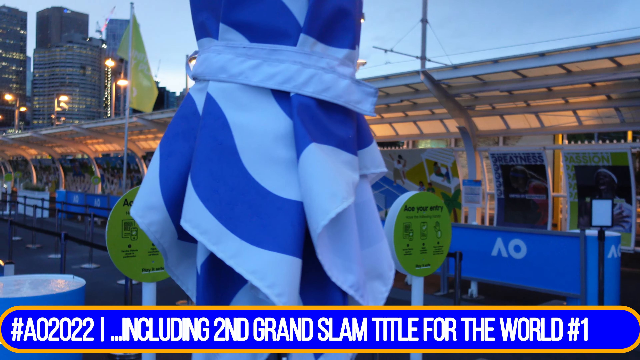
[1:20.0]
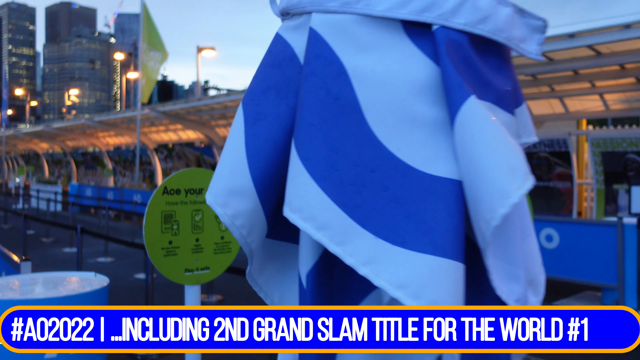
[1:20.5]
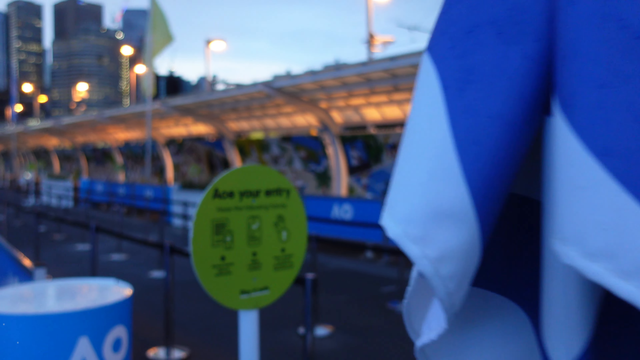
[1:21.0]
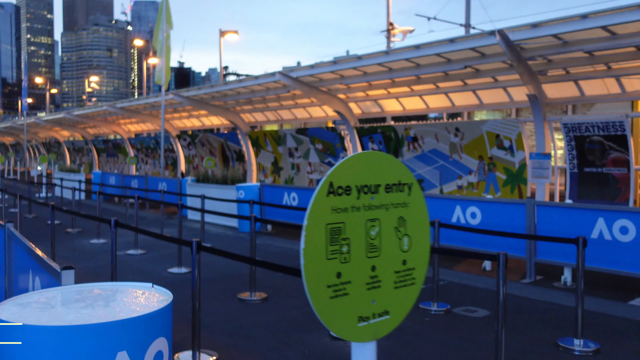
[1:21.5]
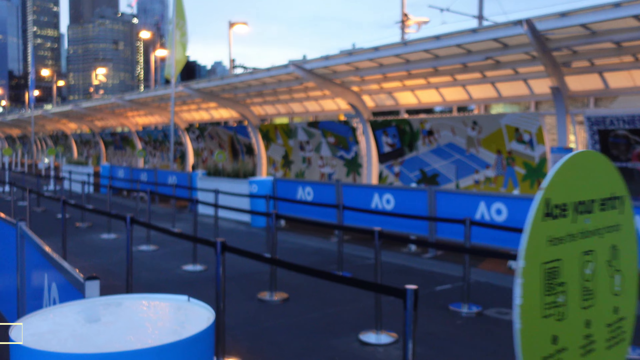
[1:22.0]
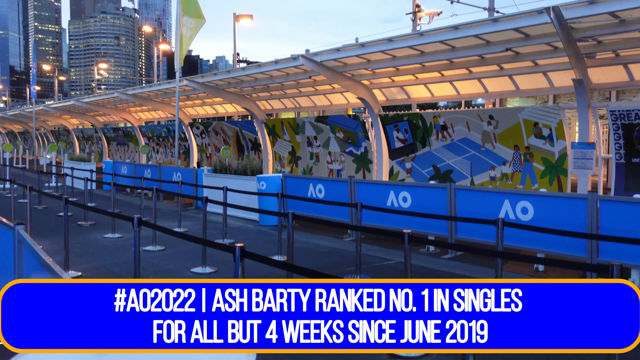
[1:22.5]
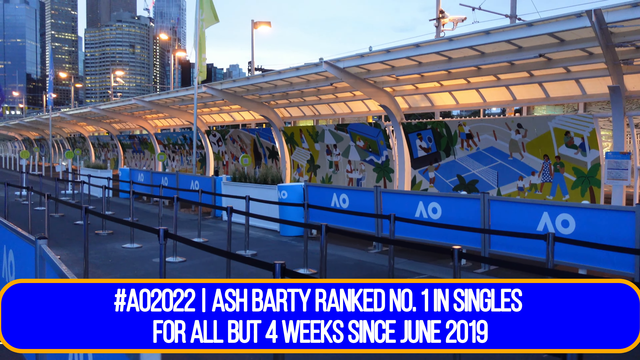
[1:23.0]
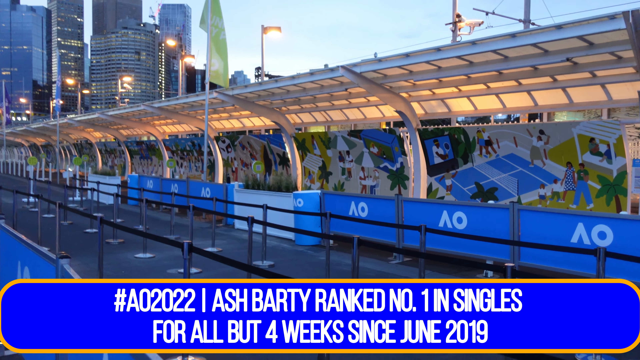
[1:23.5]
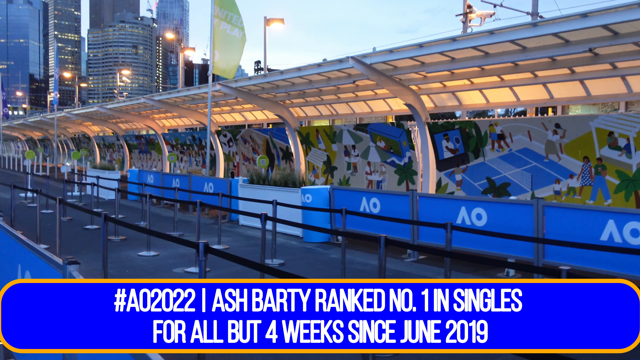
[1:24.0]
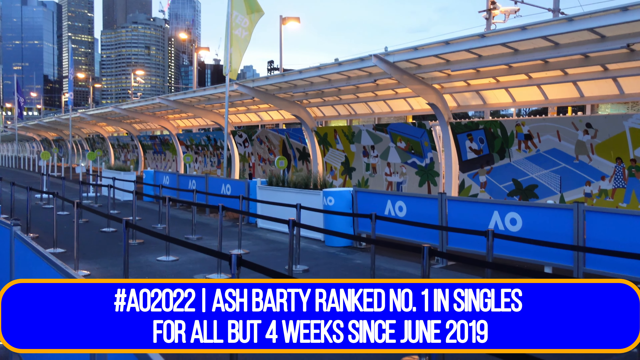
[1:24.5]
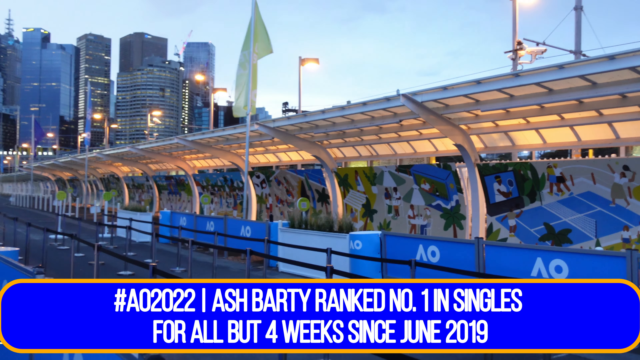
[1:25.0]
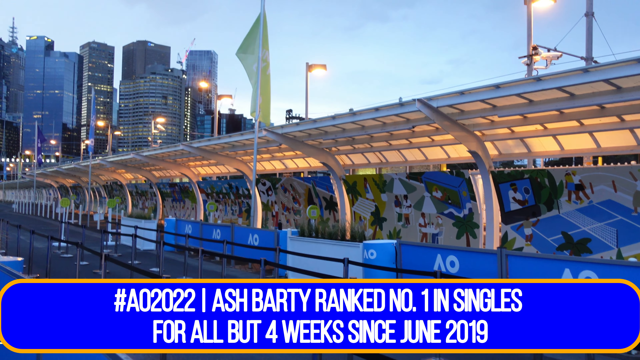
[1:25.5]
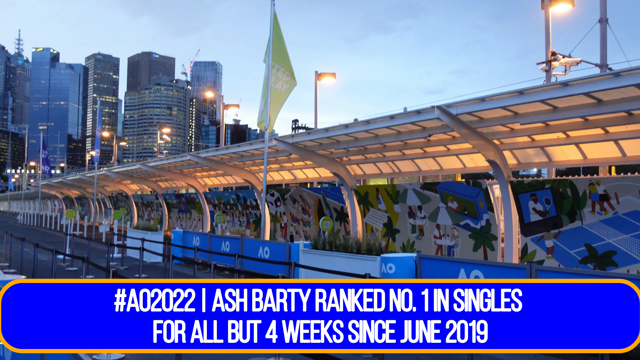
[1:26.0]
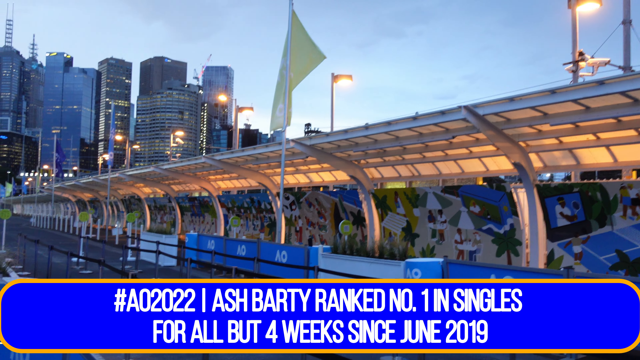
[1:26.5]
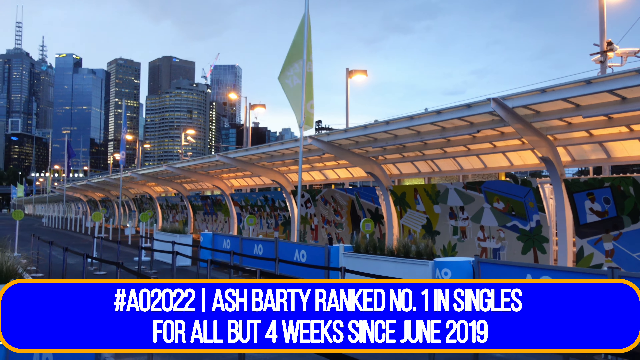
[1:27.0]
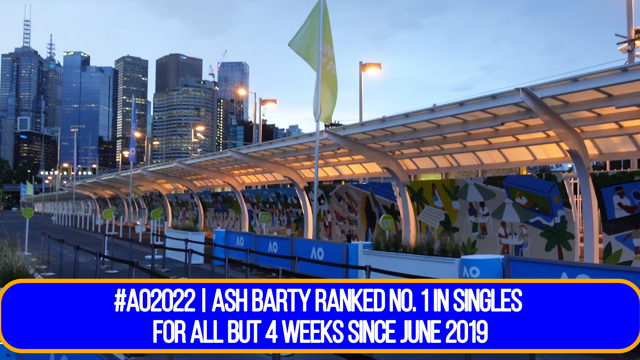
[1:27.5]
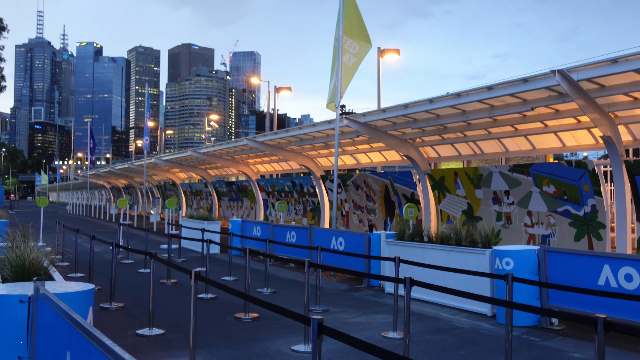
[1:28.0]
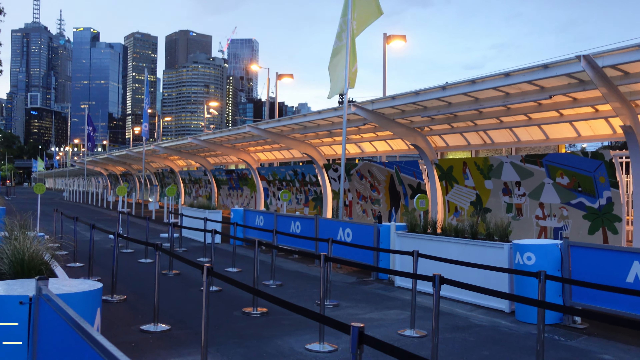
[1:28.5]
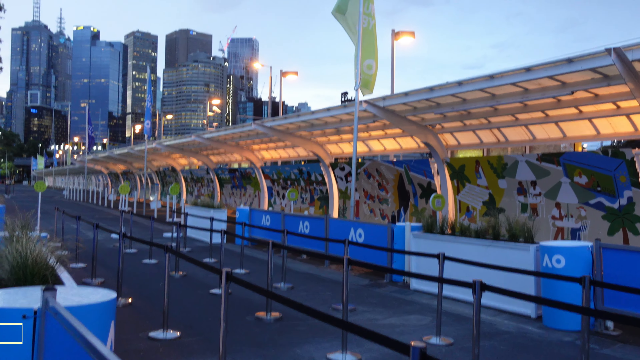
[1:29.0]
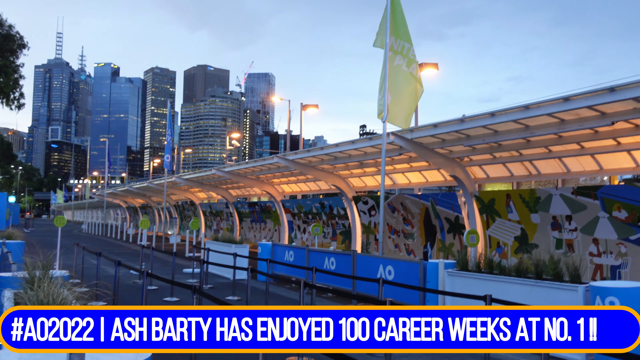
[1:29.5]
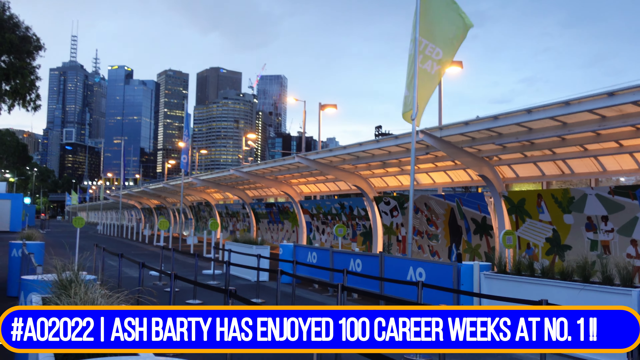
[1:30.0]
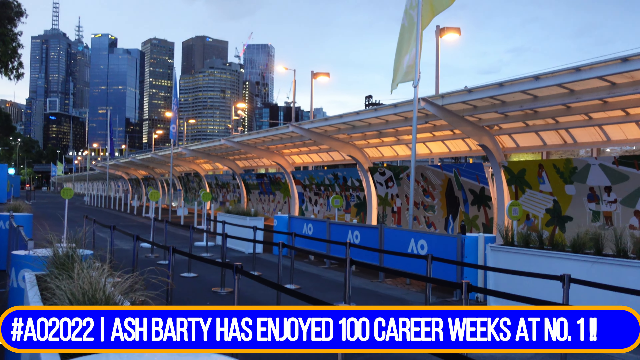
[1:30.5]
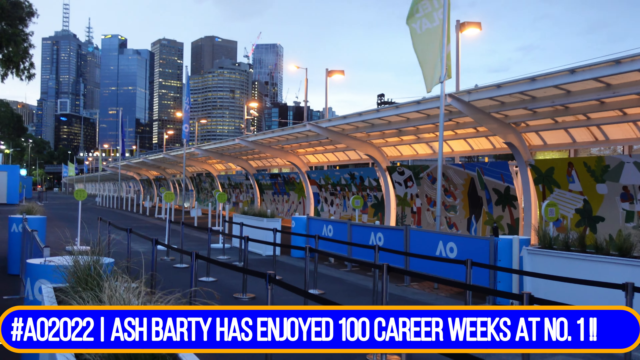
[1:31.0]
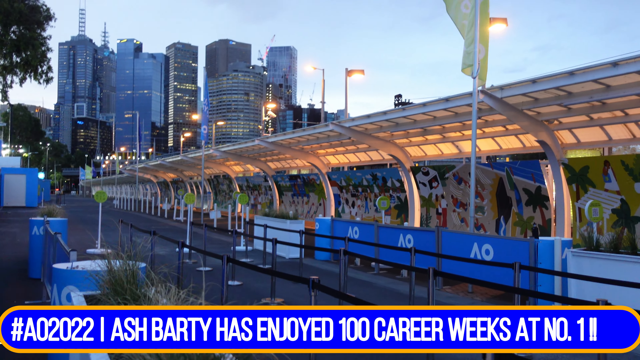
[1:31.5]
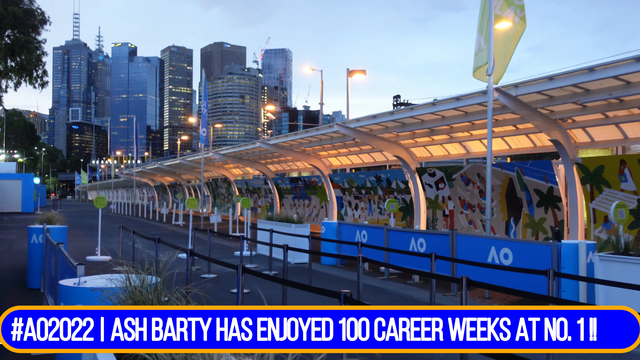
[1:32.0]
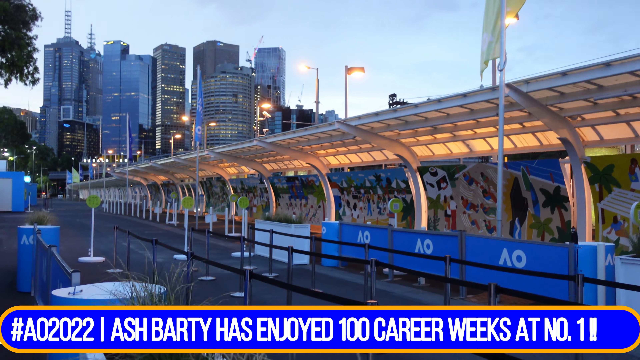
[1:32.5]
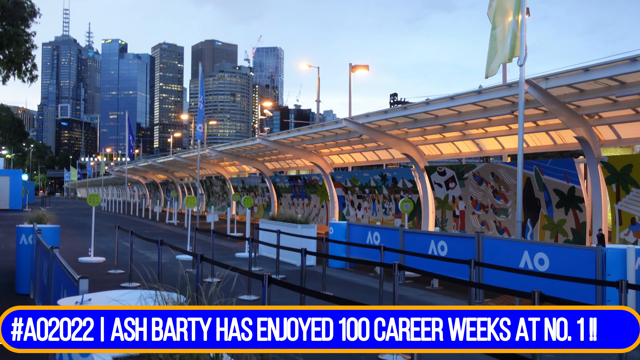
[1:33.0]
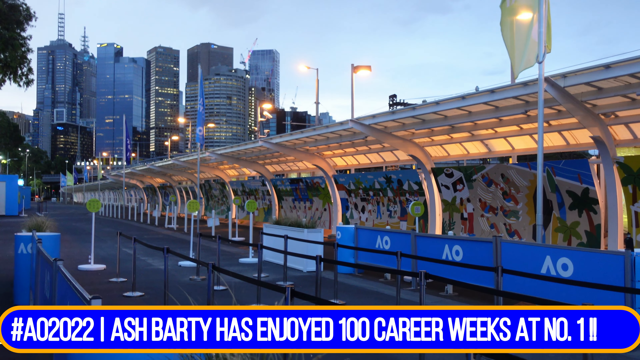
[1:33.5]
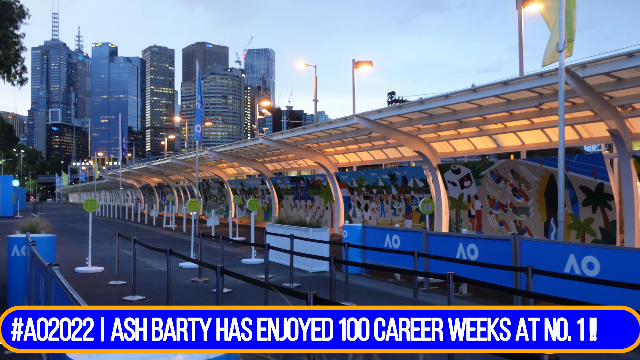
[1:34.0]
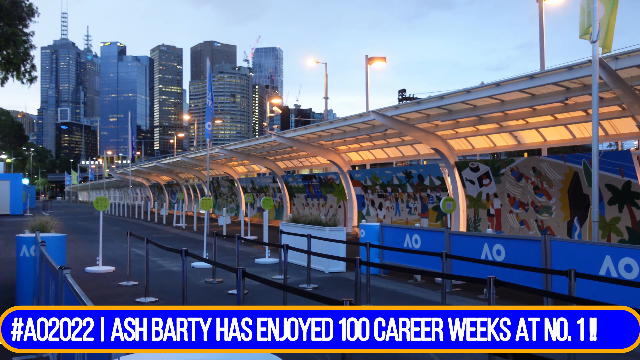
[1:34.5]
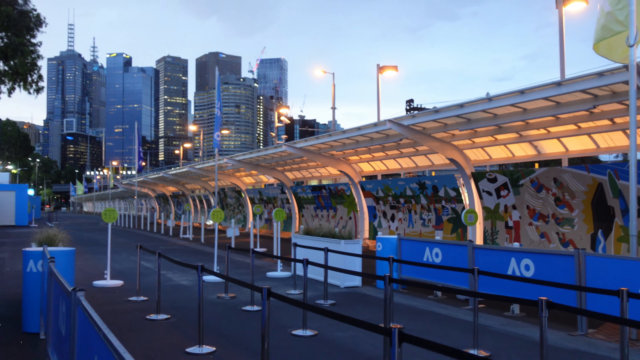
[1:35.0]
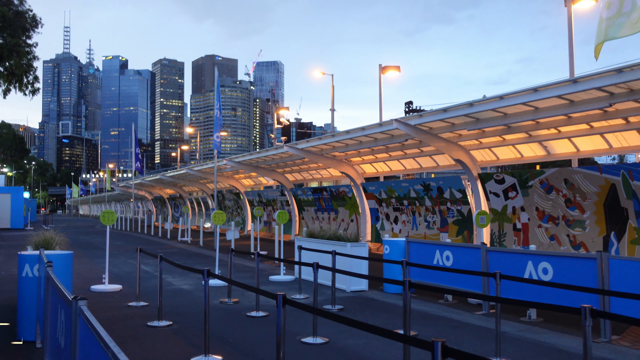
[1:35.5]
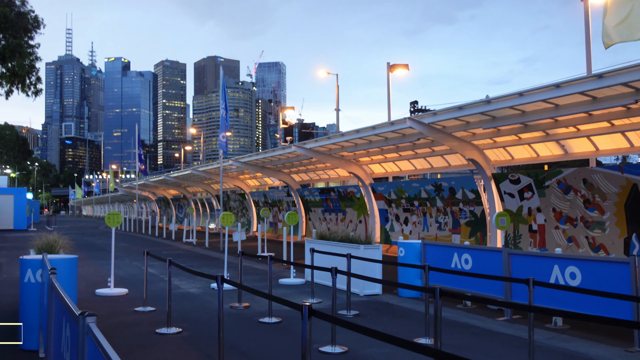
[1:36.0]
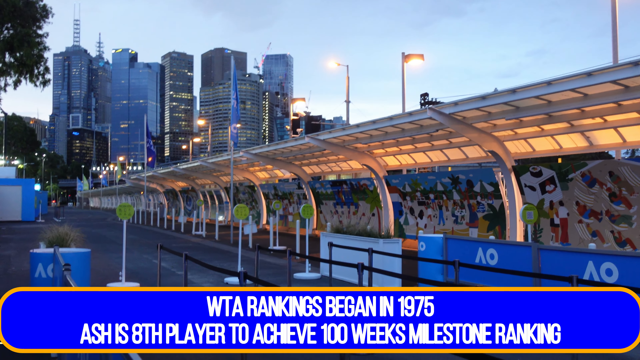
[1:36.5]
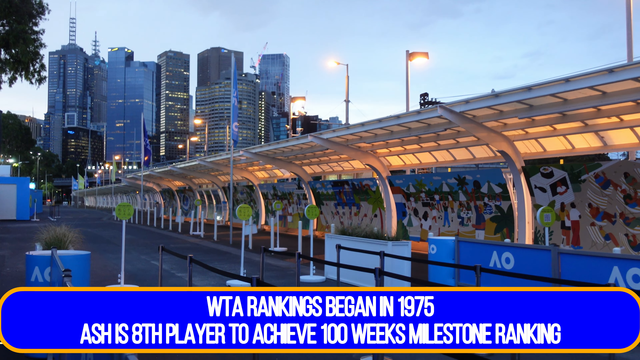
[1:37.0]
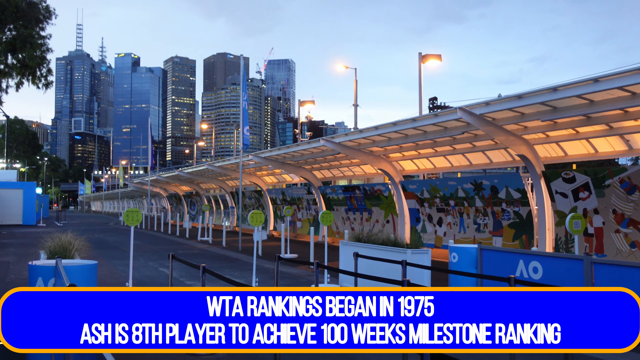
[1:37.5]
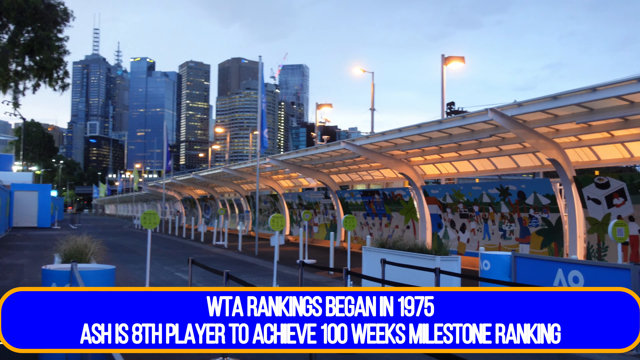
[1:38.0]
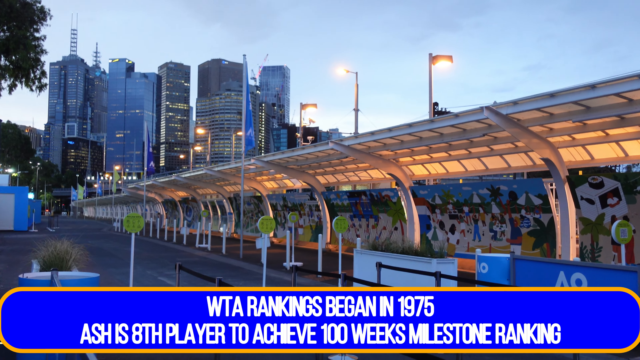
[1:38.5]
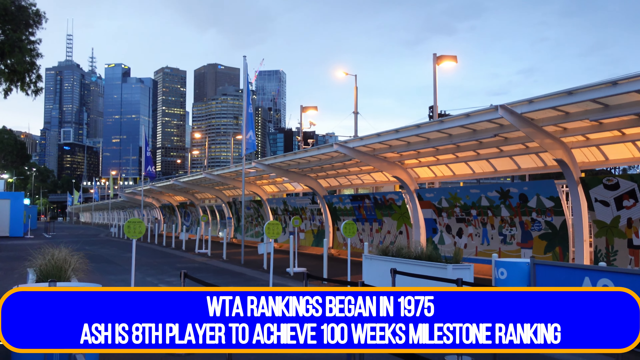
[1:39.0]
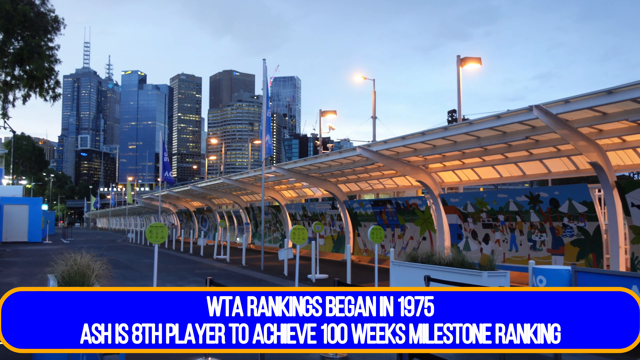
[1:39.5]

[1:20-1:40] Text at the bottom reads "Australia Open 2022... including second Grand Slam title for the world number one". The camera focuses on an umbrella as the person holding it starts walking. Another text appears at the bottom reading "Ash Barty's ranked number one in singles for all but four weeks since June 2019". A roof extension is on the side, along with lineup pylons, all empty. In the background are many buildings, possibly the main city. Another text reads "WTA rankings began in 1975. Ash is eighth player to achieve 100 weeks milestone ranking". The person keeps walking towards the building area, showing a little of the entry area, while banners run along the bottom of the video. The area is mostly empty, and it looks like early dawn or maybe evening. There are no people in view; the video is recorded from a first-person point of view.